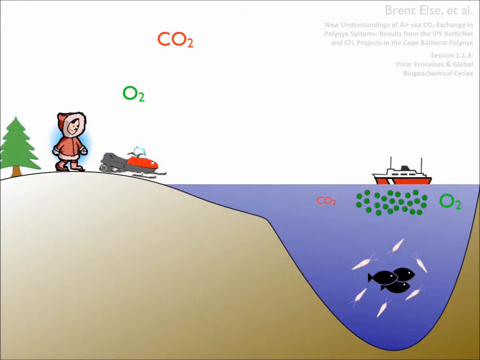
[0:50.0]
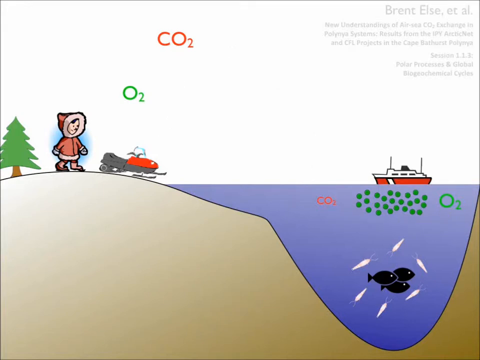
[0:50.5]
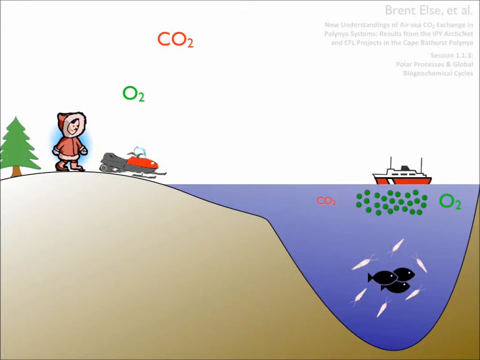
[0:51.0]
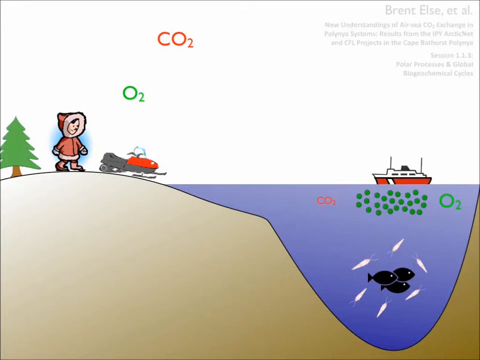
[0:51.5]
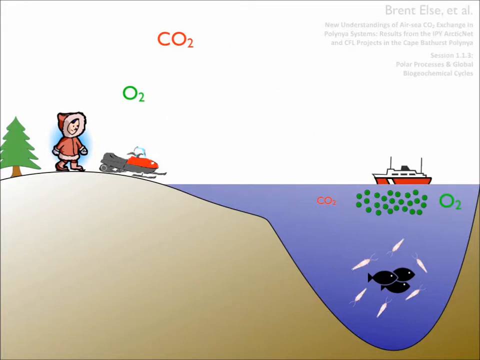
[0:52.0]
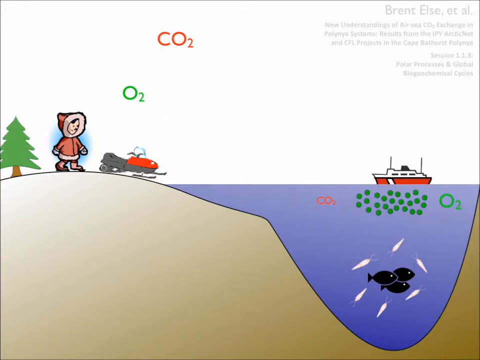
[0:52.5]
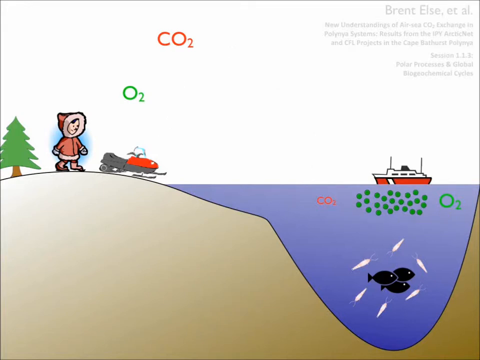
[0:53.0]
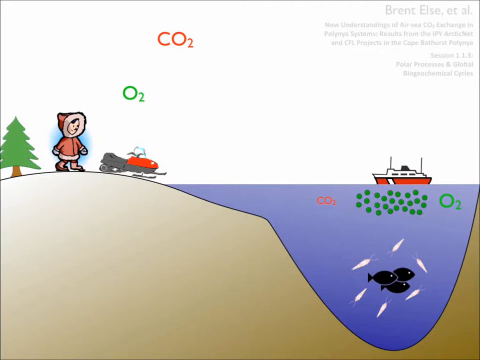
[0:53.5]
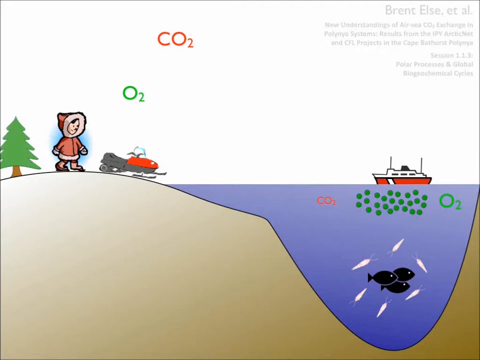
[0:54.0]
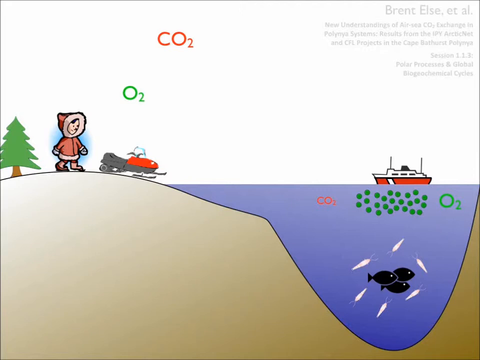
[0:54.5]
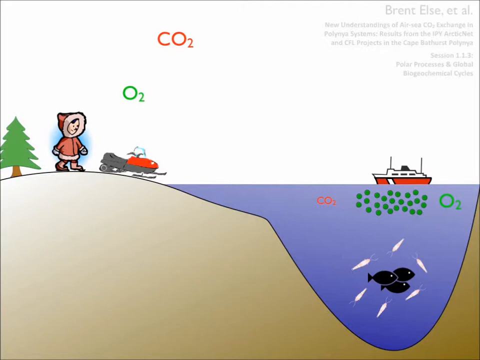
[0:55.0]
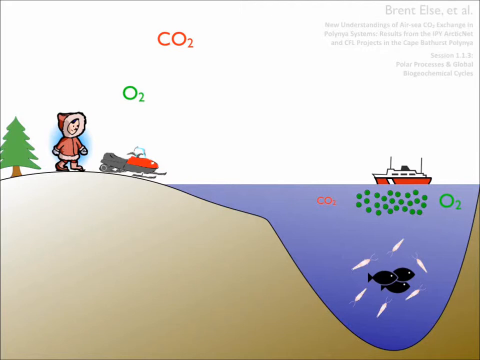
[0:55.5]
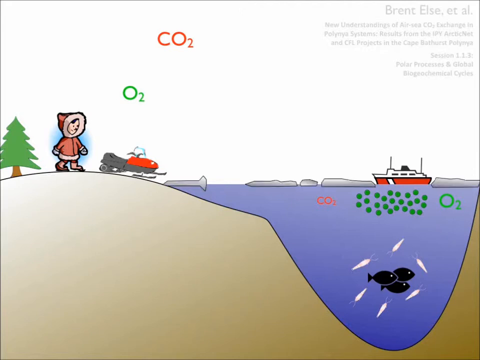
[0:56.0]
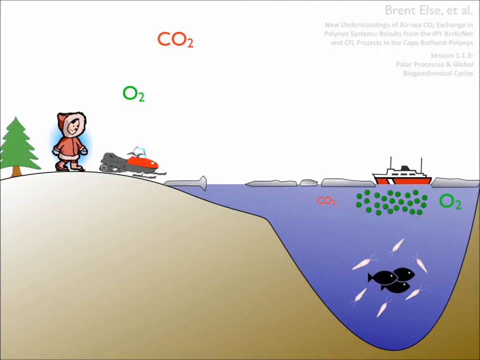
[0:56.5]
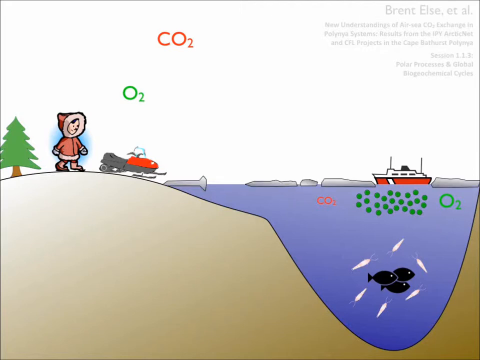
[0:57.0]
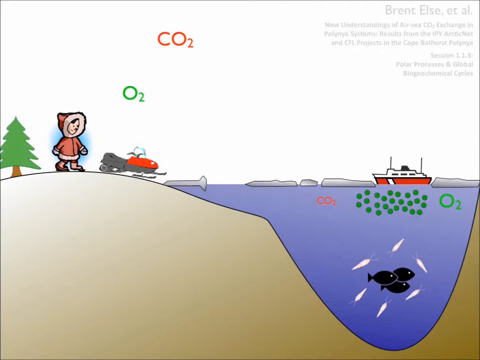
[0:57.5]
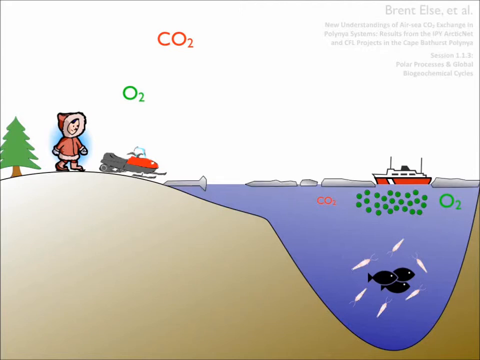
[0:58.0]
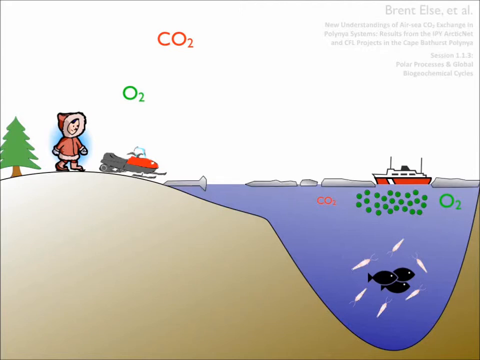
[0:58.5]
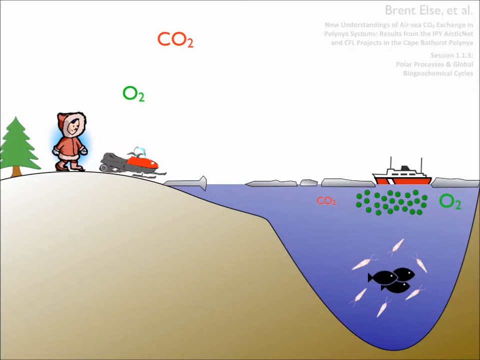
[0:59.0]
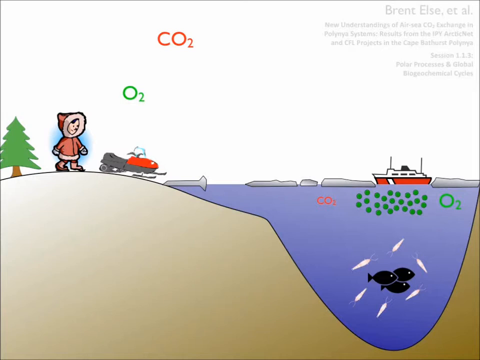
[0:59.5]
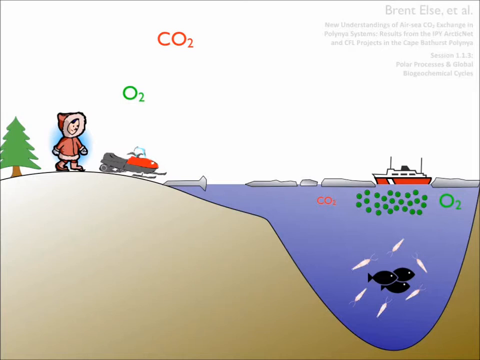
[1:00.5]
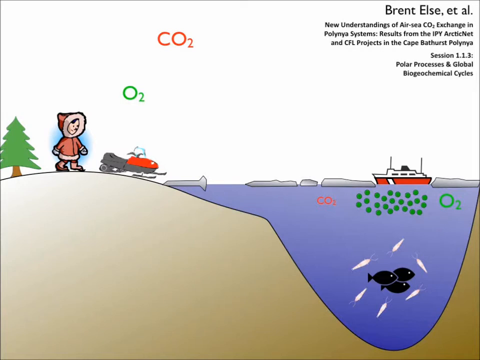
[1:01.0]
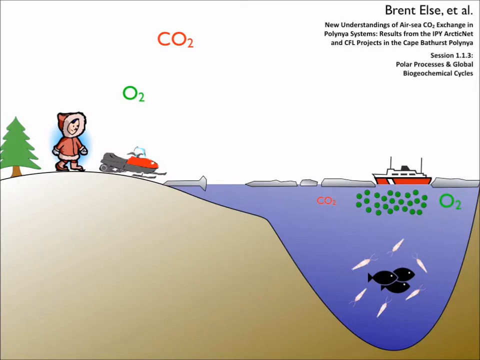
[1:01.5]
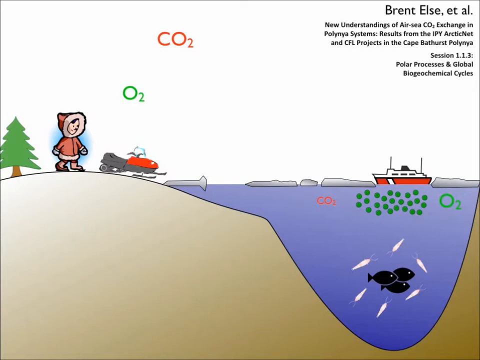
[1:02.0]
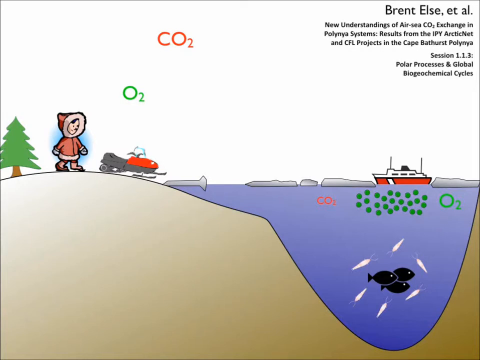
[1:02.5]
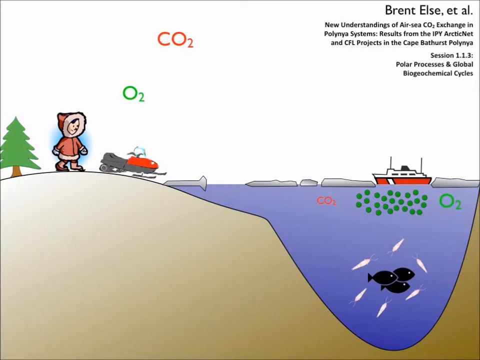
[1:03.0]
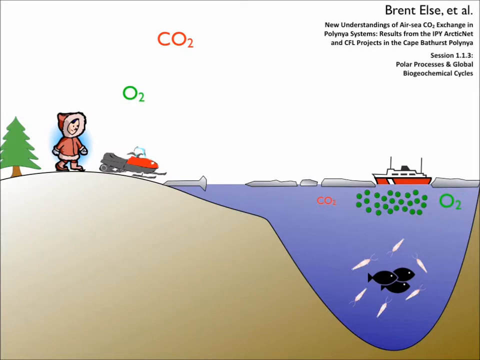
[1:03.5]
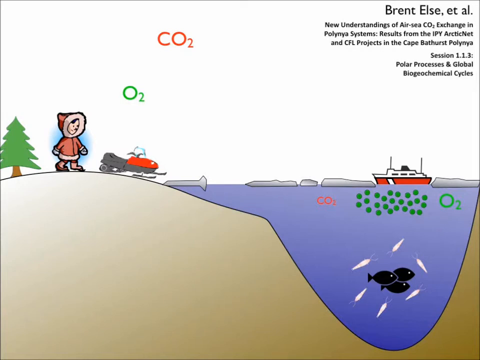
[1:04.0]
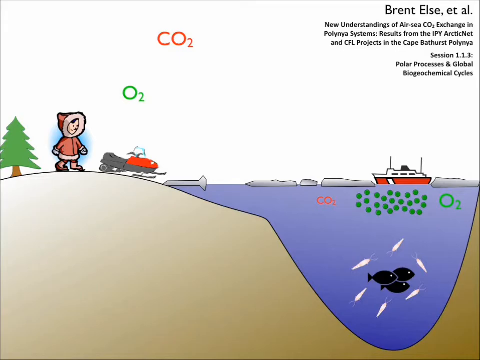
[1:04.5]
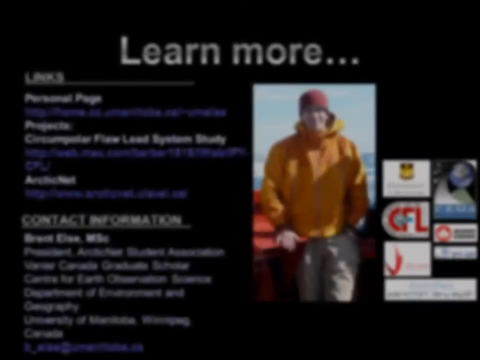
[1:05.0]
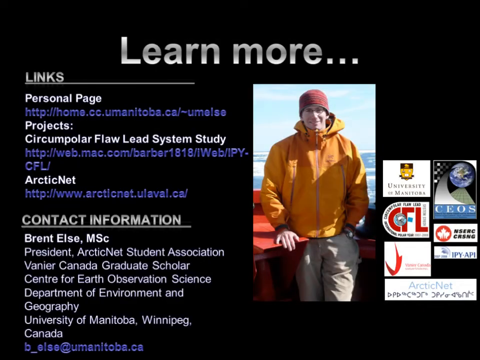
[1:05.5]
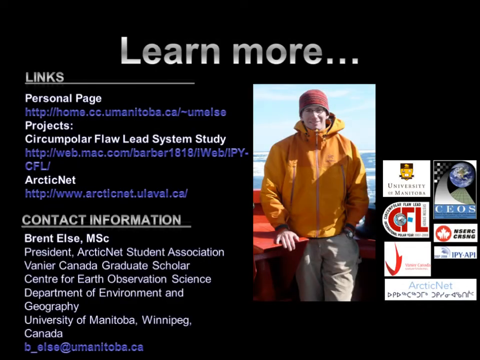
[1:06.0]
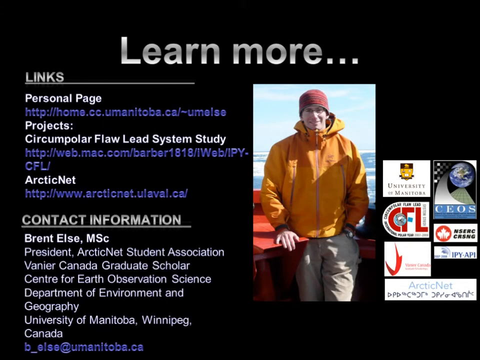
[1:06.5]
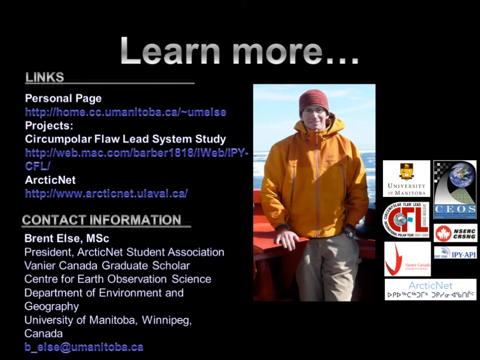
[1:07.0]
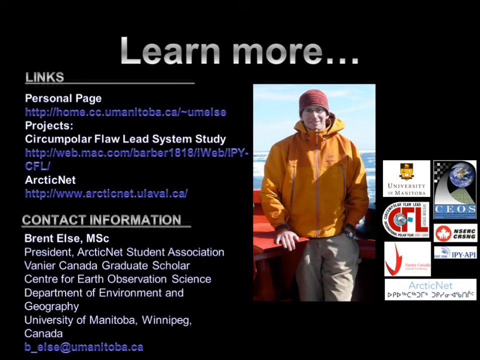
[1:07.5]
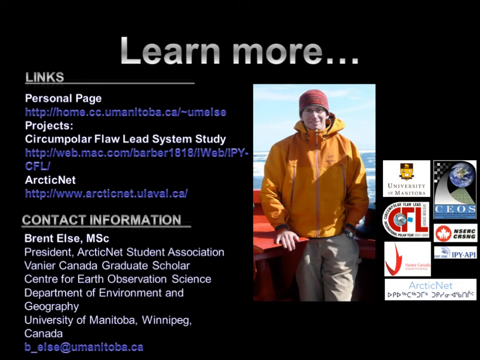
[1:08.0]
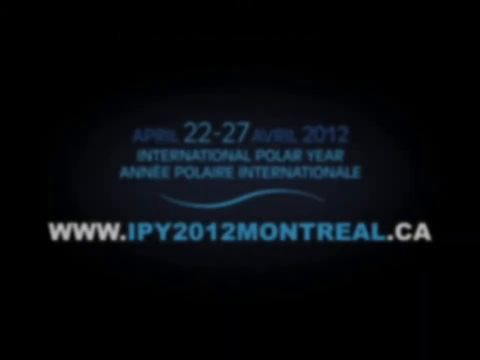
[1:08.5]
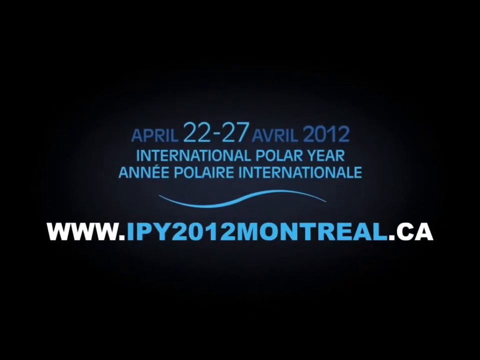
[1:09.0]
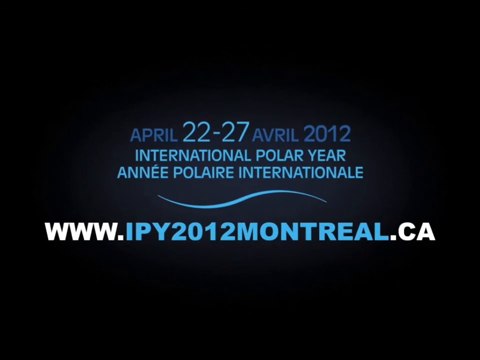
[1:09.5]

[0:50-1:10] The name Brent Else can be faintly made out in the upper right corner, along with a description of the drawing, but it is very light in color and hard to read. Several small, rather flat icebergs appear on the water, surrounding the ship, with one also at each edge of the land. The upper right corner text then appears in black, making it easy to read. The next slide is black, with a picture of Brent in a red beanie and orange parka standing outside on a red boat over the water. It includes links to various sites for more information and a list of his backgrounds, and next to his picture are logos of different organizations. The following slide shows the date of the event and a website in blue font, which has a slight glow and grows larger.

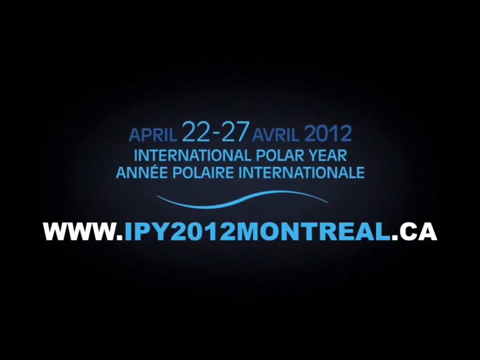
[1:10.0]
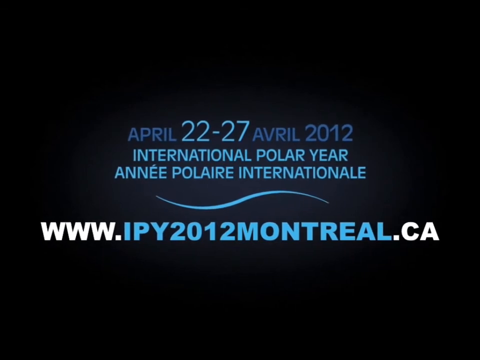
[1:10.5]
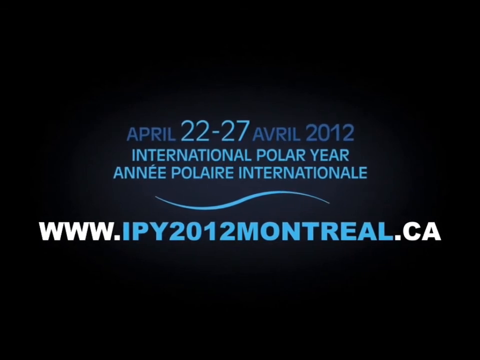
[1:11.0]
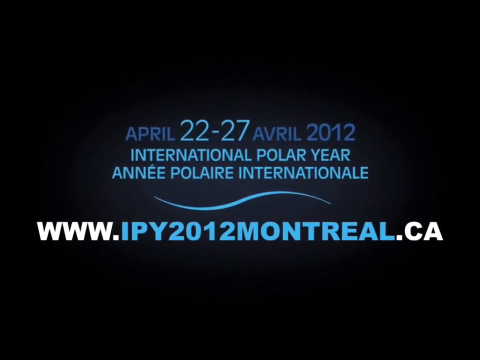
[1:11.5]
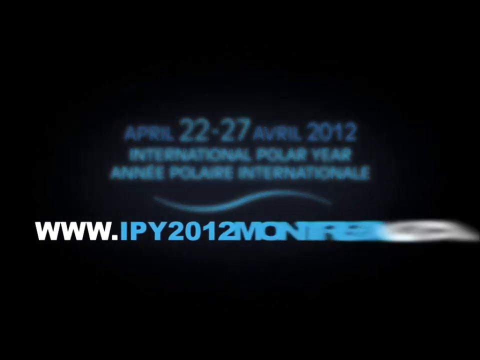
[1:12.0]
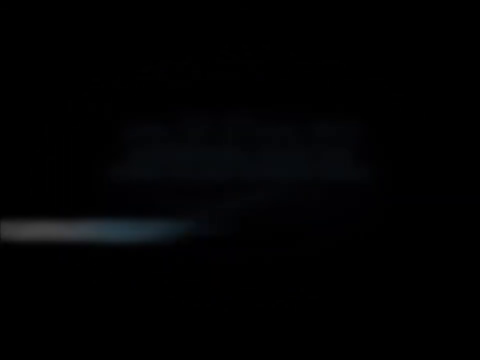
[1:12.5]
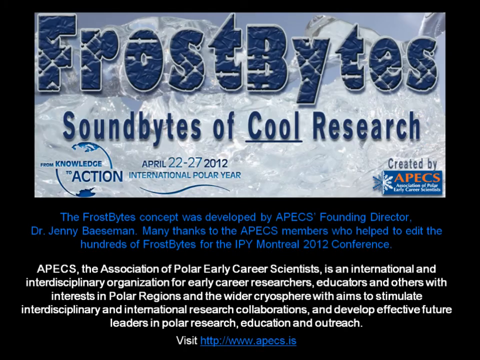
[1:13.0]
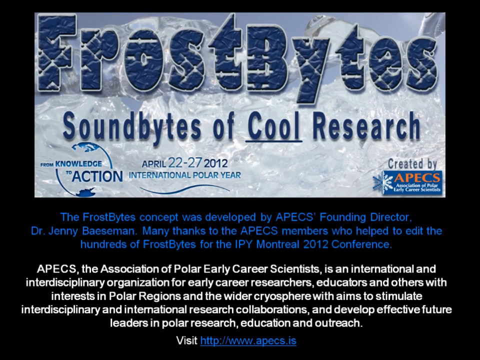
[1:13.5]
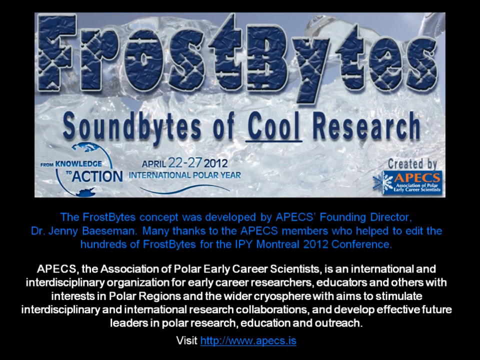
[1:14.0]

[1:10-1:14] The text gives the date, April 22nd to the 27th, International Polar Year, and the website "ipy2012montreal.ca". As the text grows larger it fills the screen, then swipes to the left. The video returns to its first screen, showing the Frostbites banner, the description of the video, and the organization that created it, APEX, the Association of Polar Early Career Scientists.